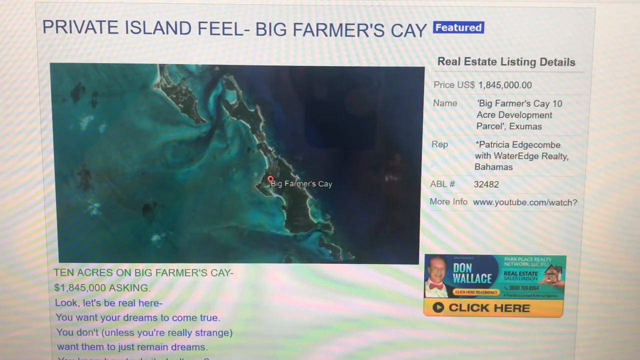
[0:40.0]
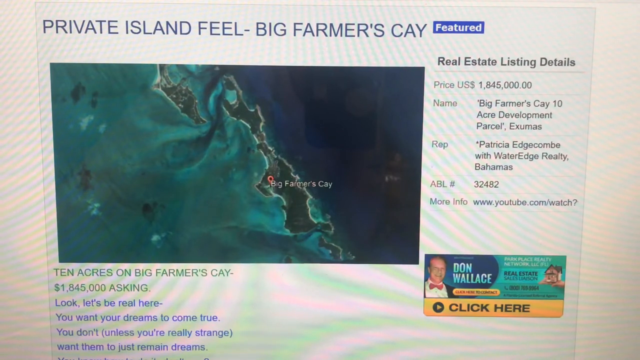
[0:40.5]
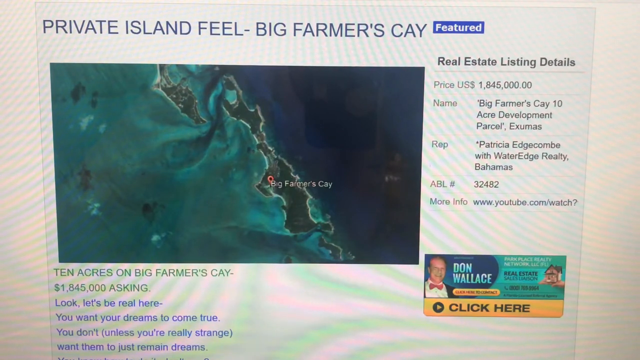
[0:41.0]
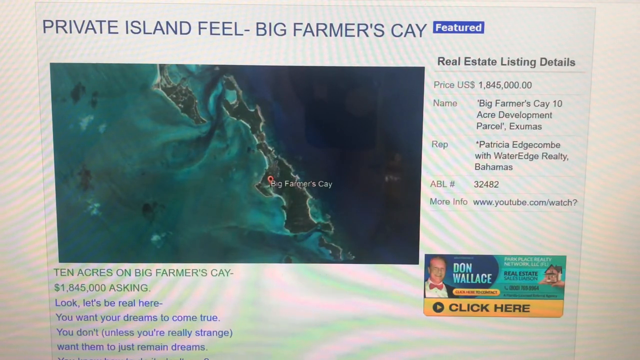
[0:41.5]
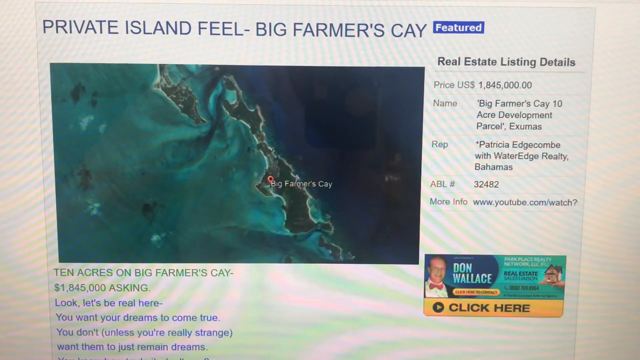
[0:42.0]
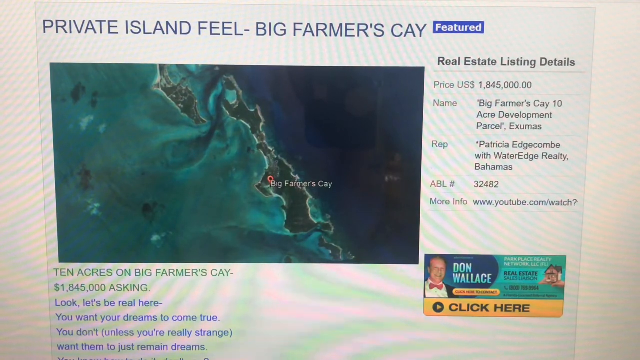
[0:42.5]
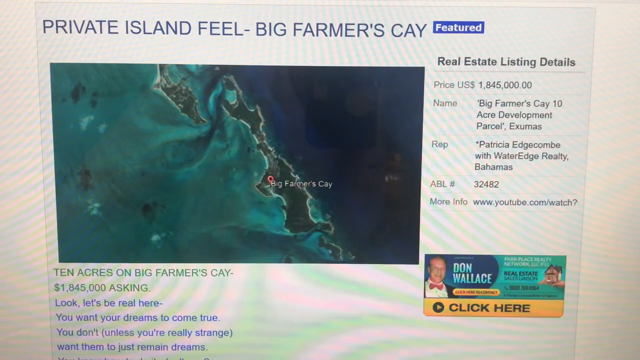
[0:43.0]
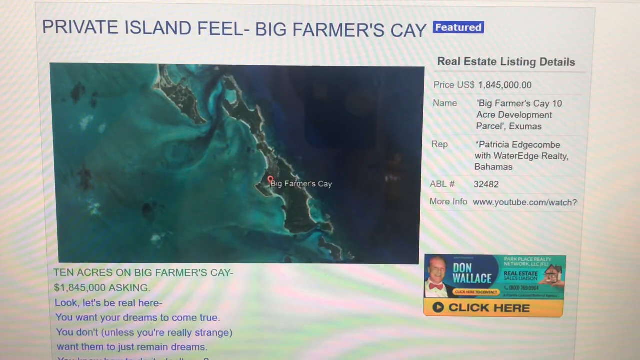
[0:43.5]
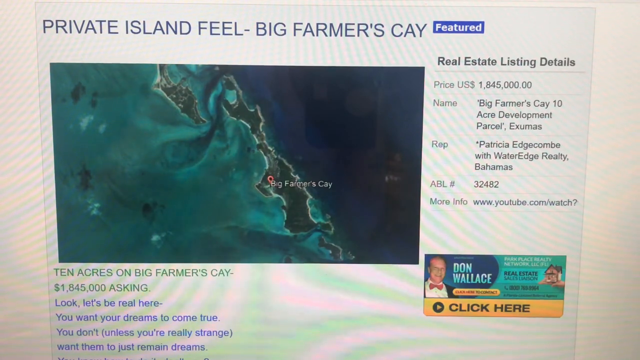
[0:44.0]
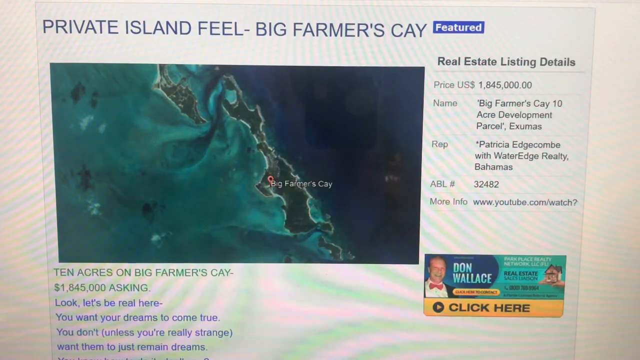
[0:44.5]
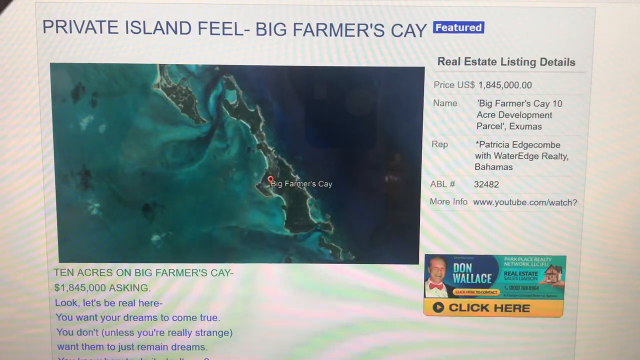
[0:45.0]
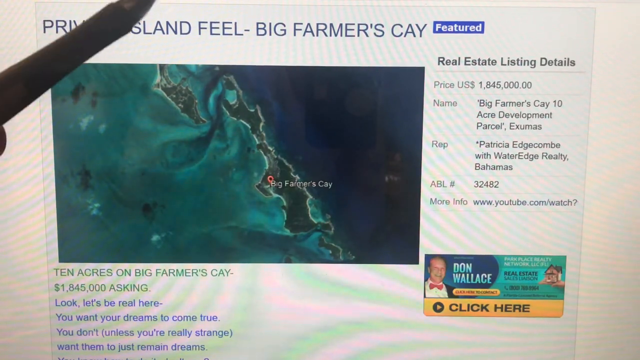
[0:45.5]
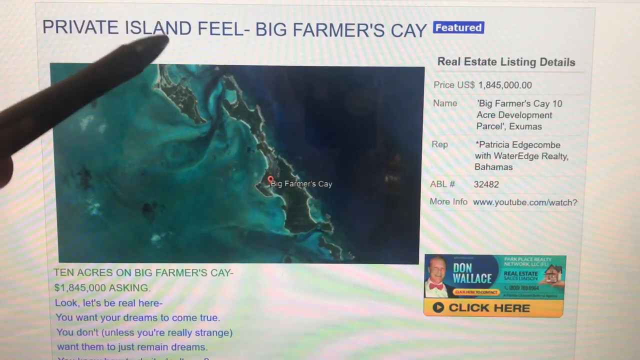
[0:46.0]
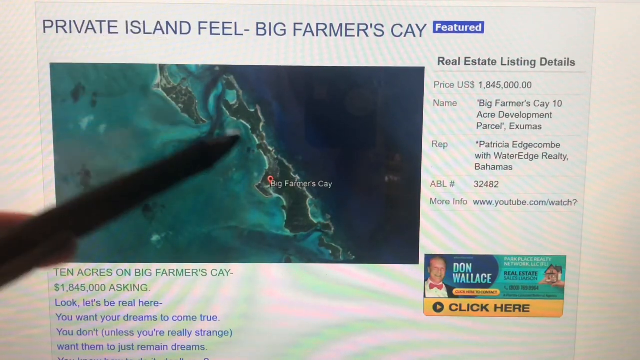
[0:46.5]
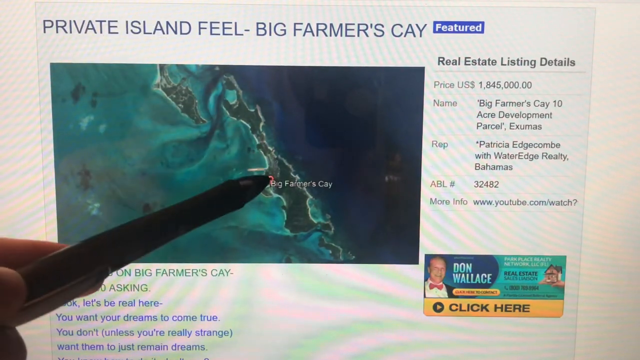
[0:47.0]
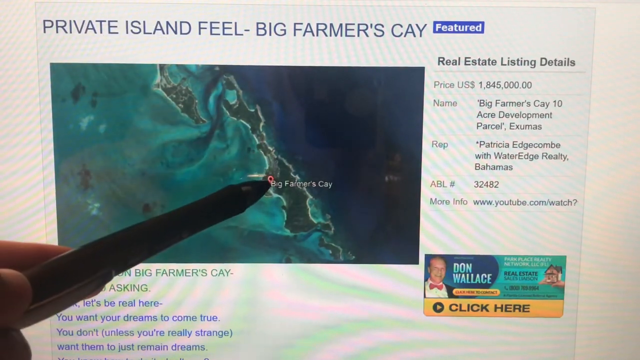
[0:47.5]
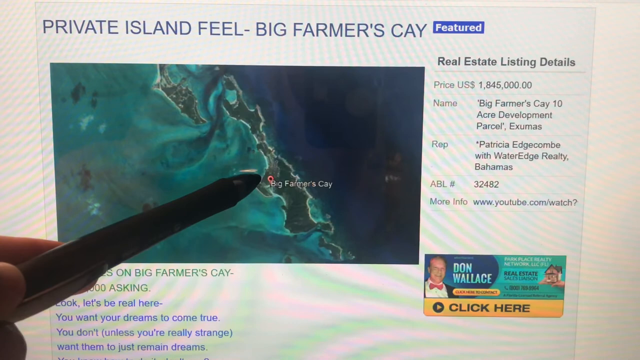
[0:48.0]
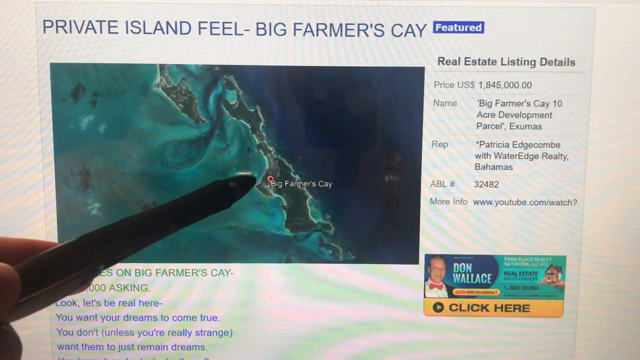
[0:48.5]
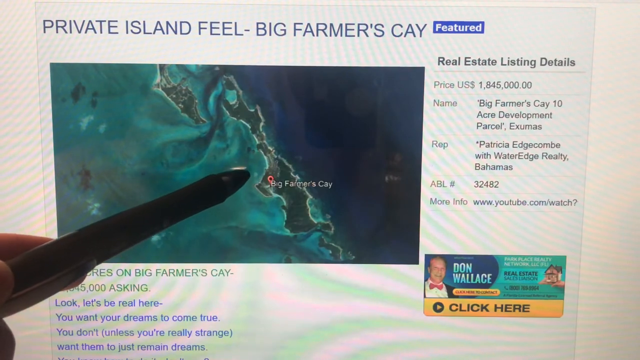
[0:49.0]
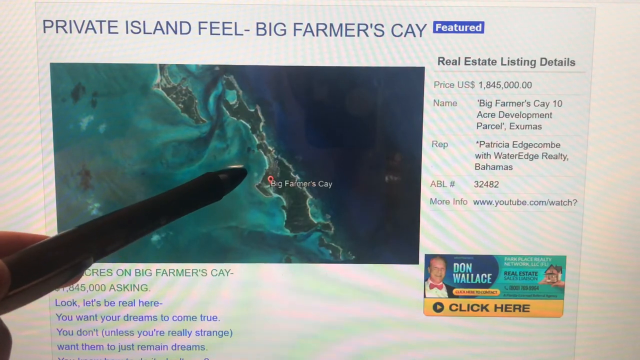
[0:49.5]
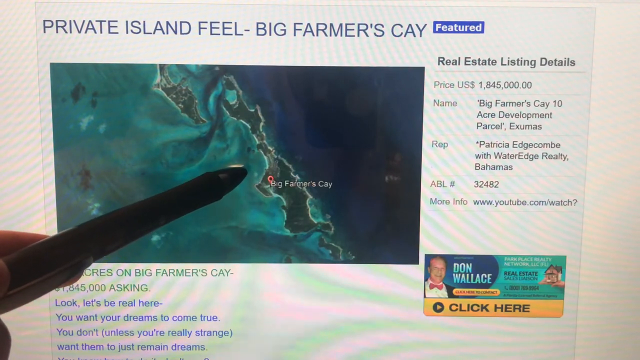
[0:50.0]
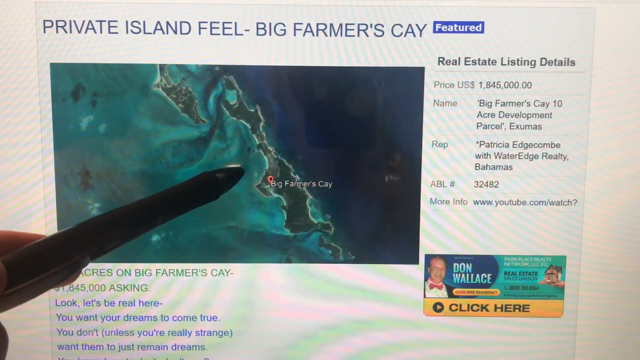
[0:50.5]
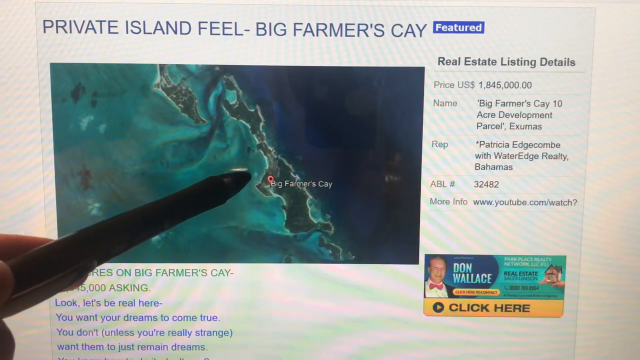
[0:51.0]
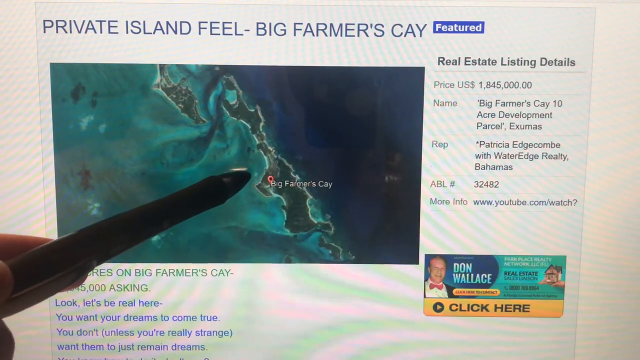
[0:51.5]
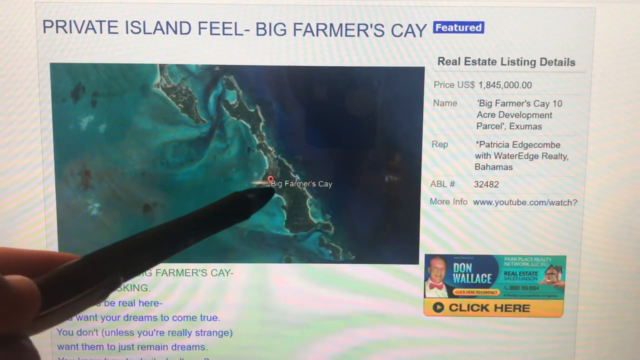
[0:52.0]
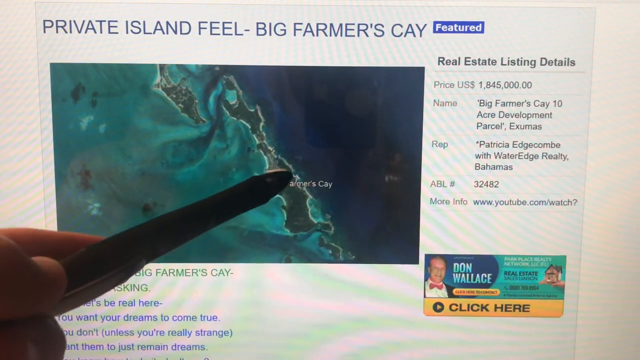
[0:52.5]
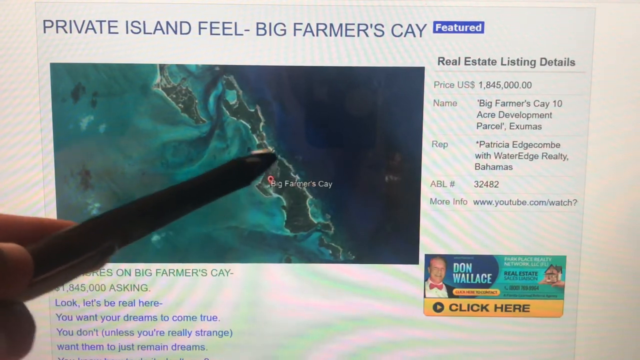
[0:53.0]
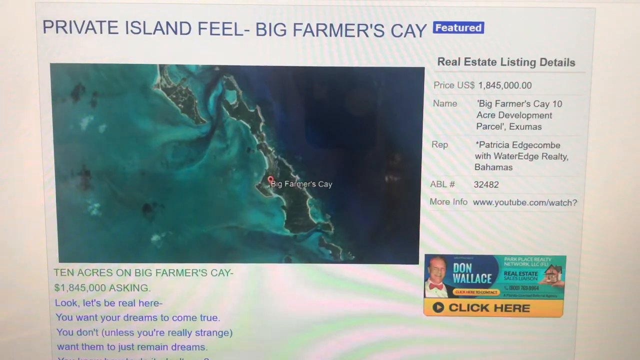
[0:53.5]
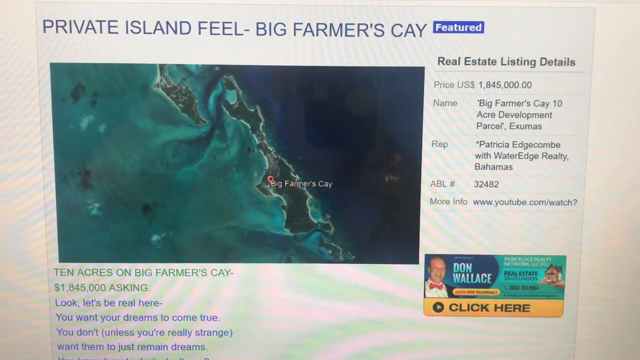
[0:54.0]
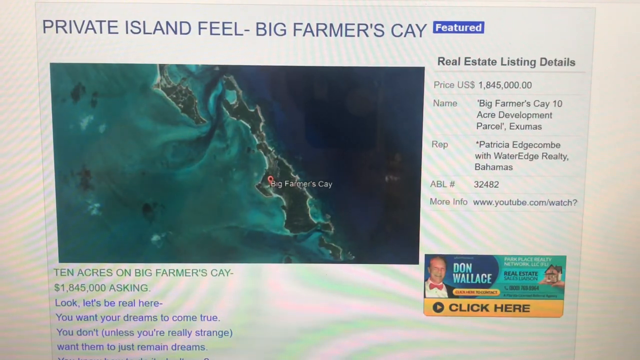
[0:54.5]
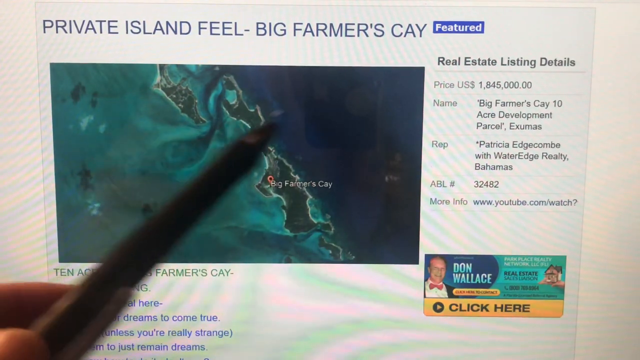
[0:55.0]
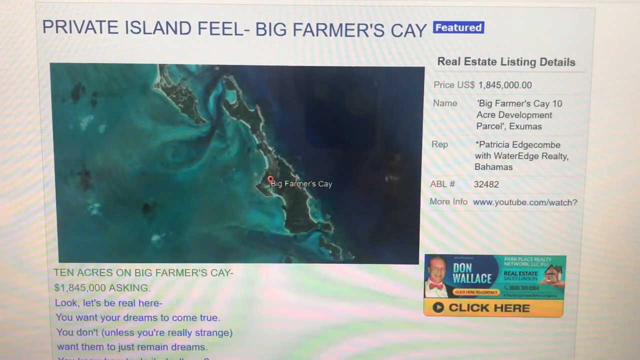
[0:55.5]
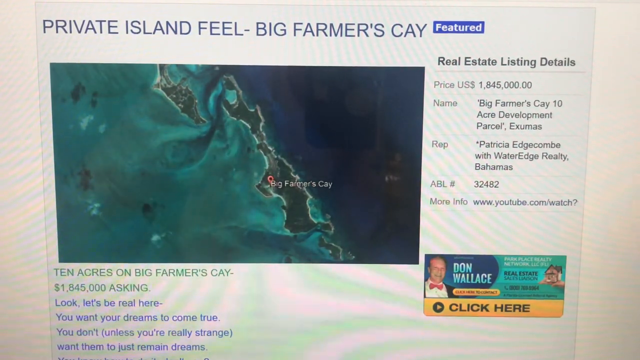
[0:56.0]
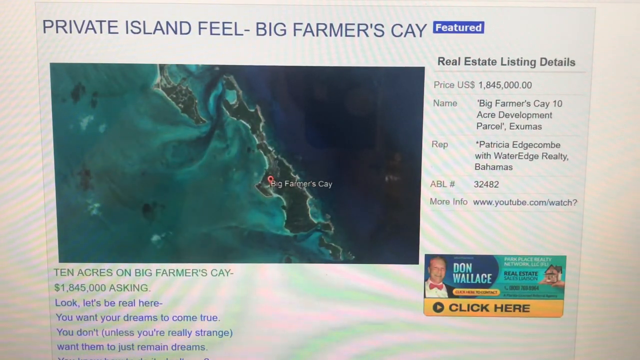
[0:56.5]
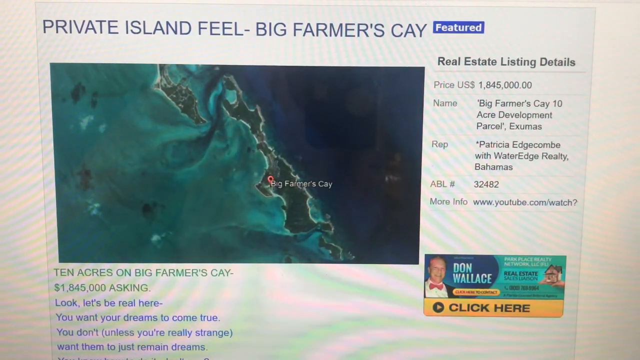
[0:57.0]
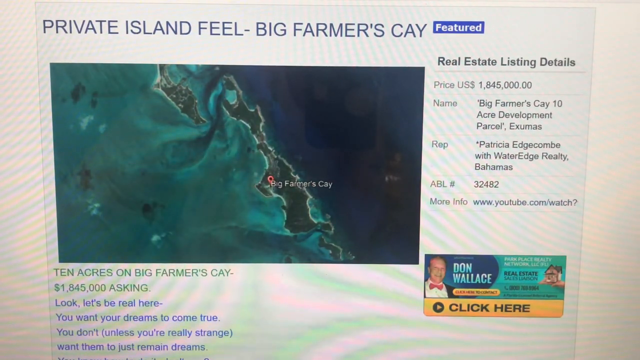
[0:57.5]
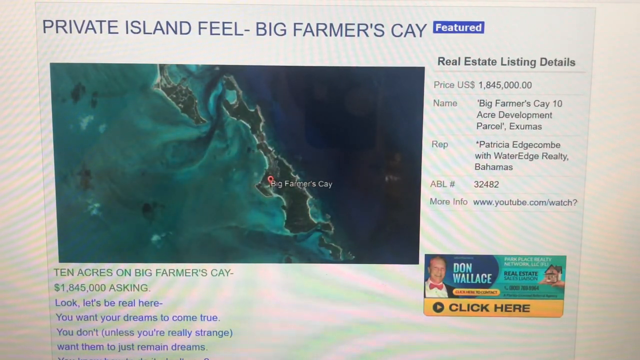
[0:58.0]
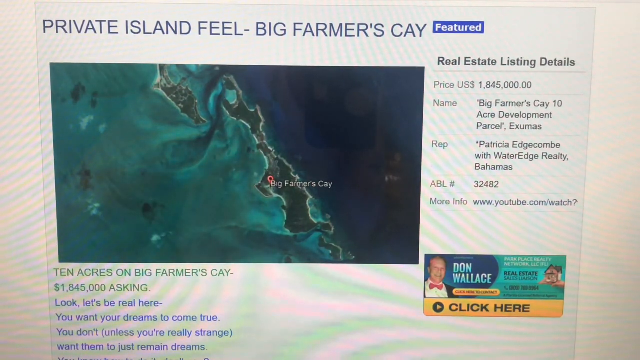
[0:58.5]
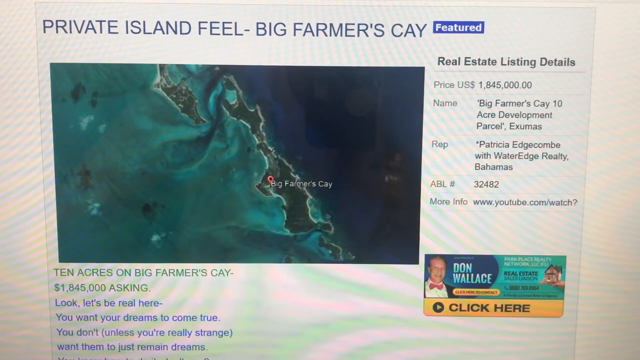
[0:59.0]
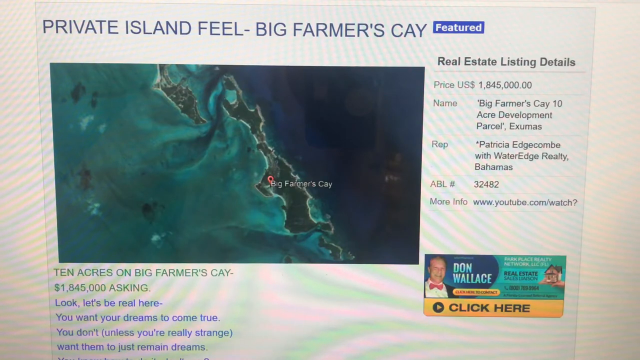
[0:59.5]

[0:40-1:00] The pen moves toward the photograph and runs along the coastline, possibly indicating where a boat could be parked or where someone could swim. It seems to indicate a very general area rather than exact spots. In the photograph, the water on the left part of the island is much shallower in colour, while on the right side there are deep blue colours that may indicate very deep water.